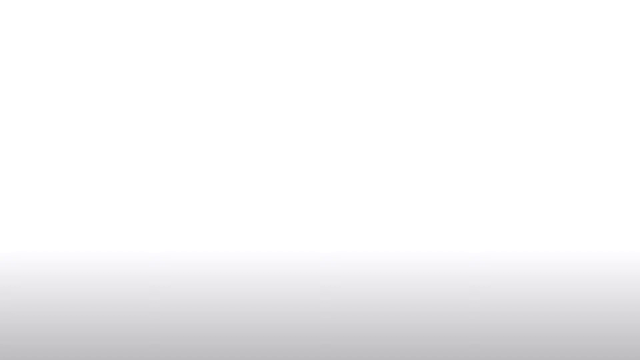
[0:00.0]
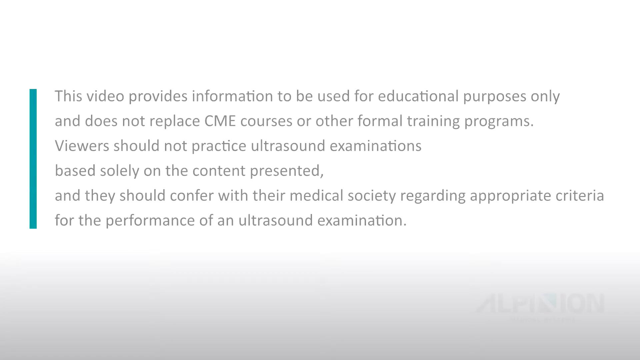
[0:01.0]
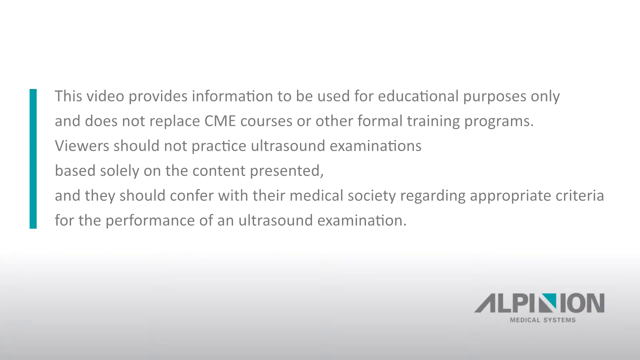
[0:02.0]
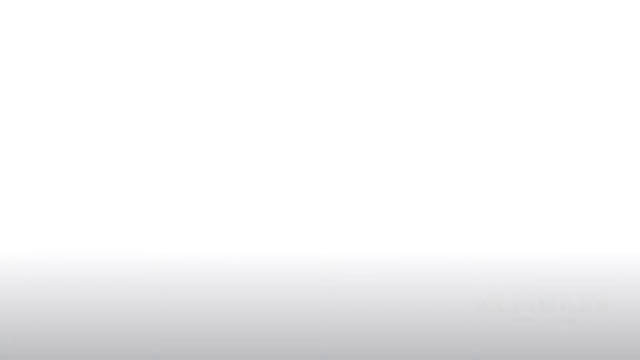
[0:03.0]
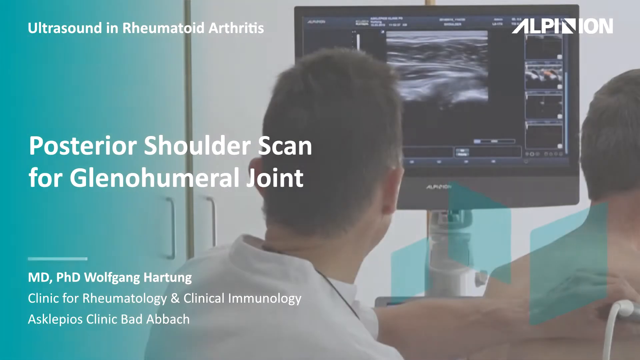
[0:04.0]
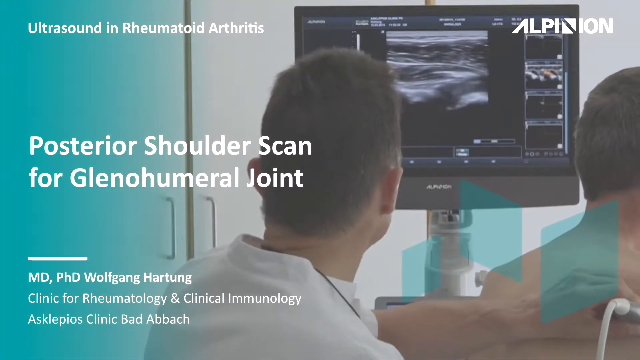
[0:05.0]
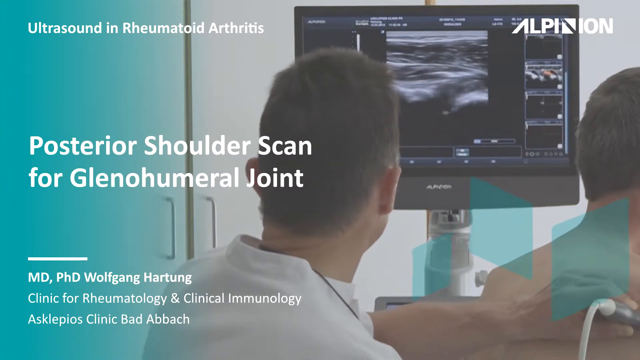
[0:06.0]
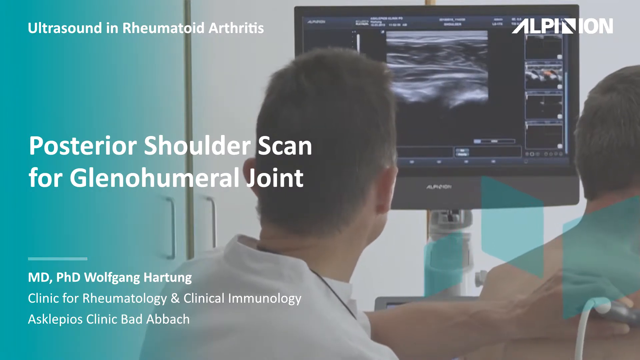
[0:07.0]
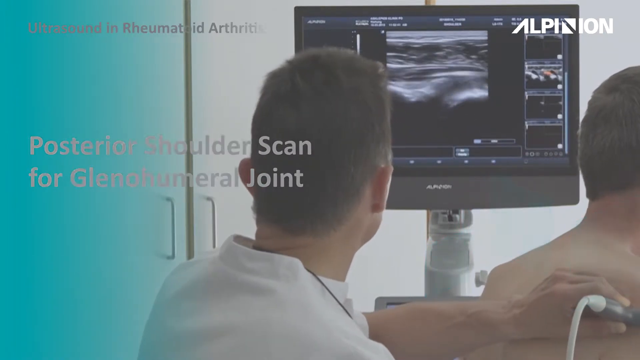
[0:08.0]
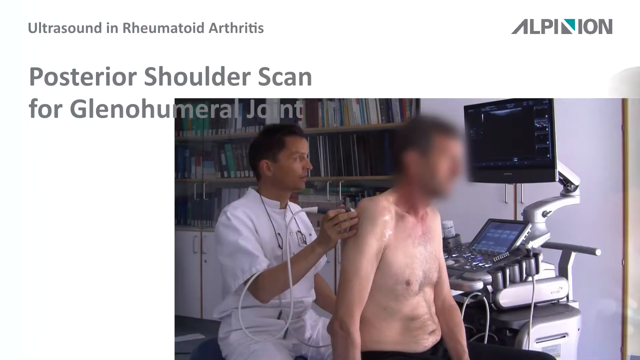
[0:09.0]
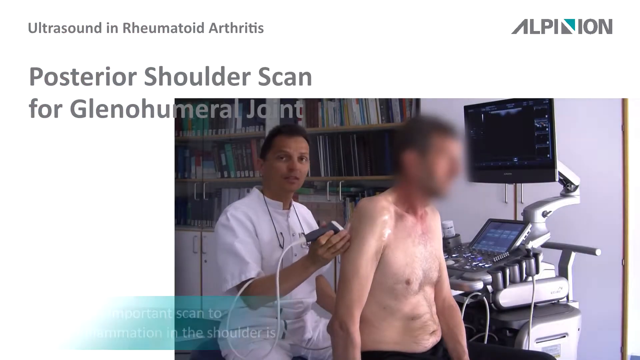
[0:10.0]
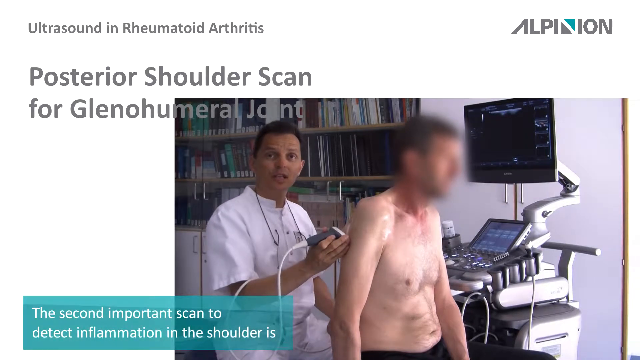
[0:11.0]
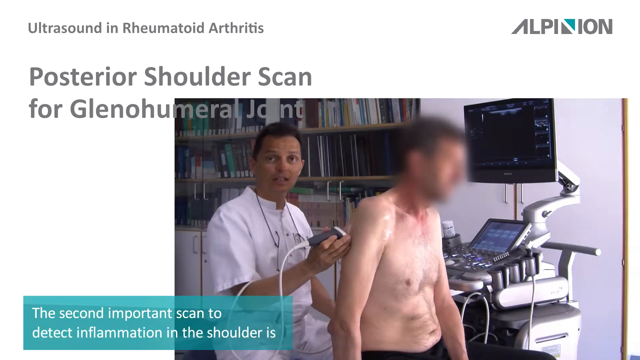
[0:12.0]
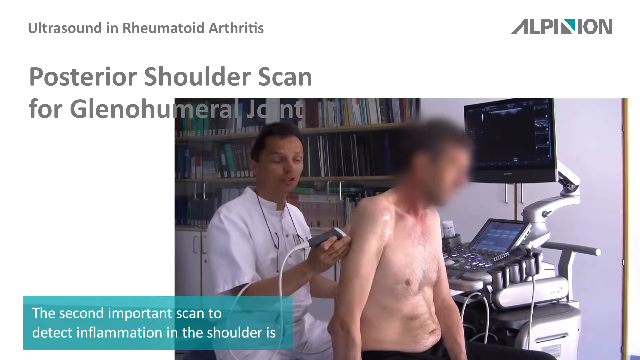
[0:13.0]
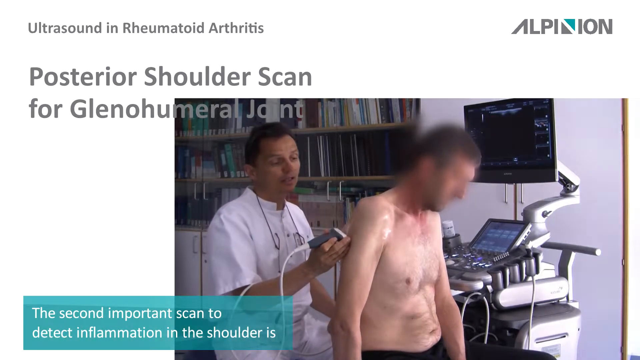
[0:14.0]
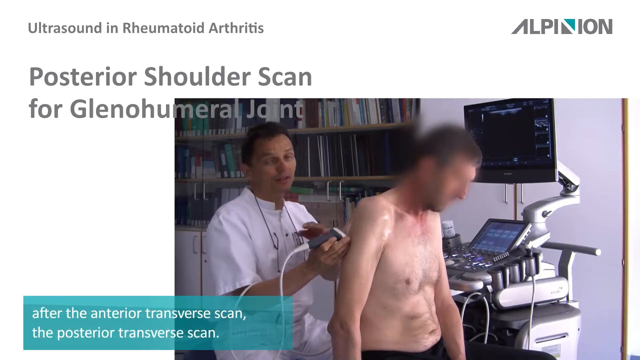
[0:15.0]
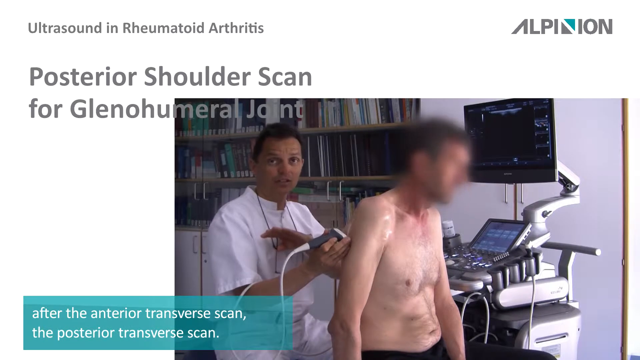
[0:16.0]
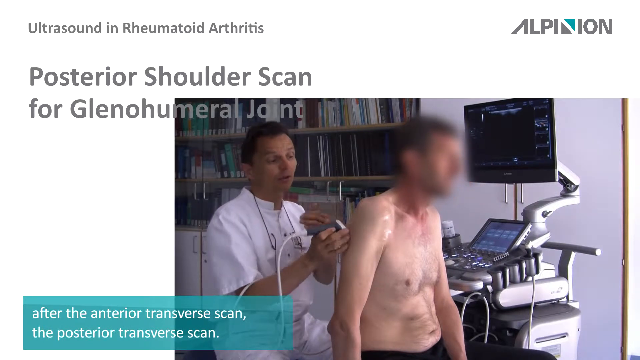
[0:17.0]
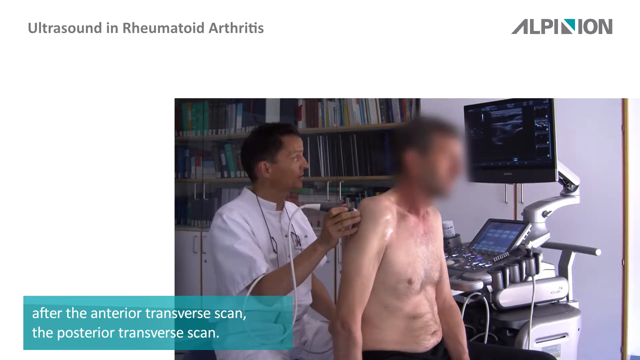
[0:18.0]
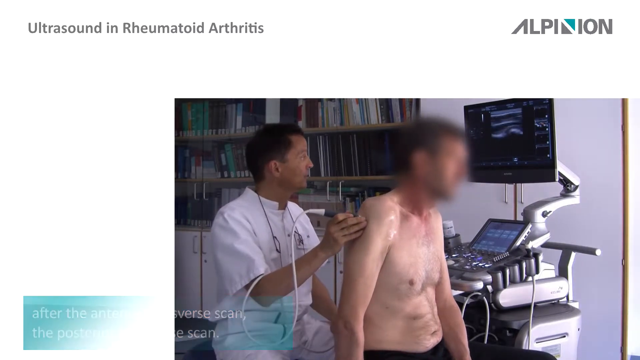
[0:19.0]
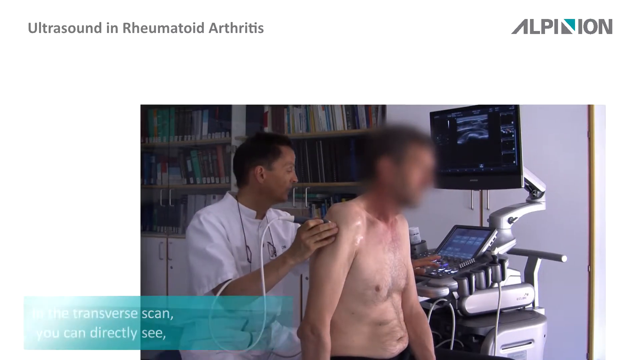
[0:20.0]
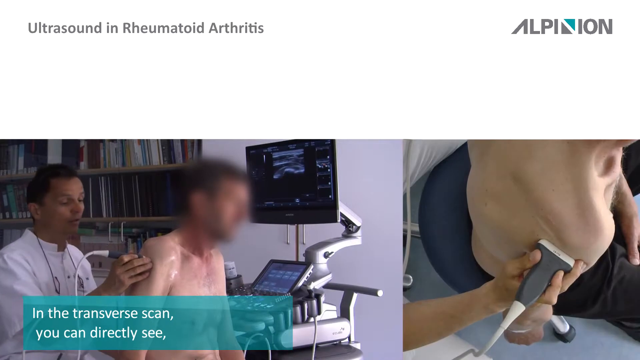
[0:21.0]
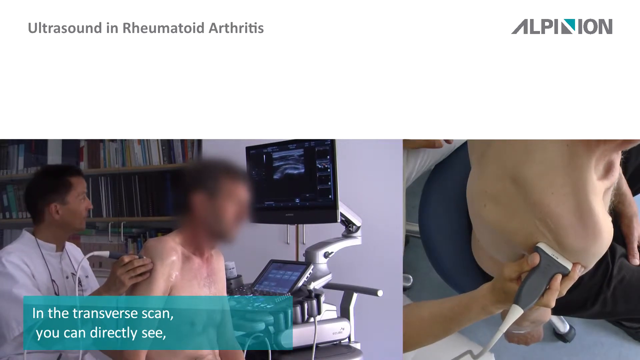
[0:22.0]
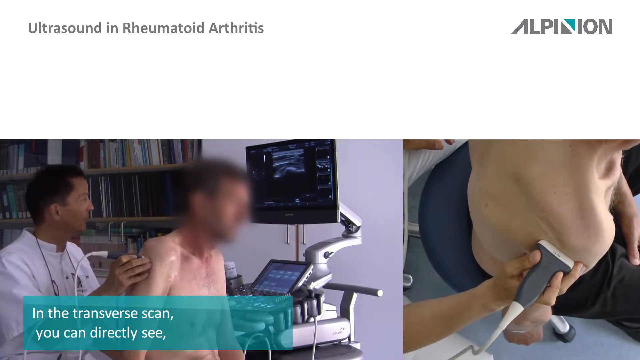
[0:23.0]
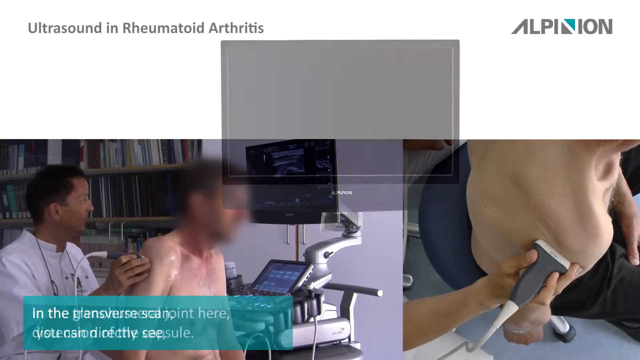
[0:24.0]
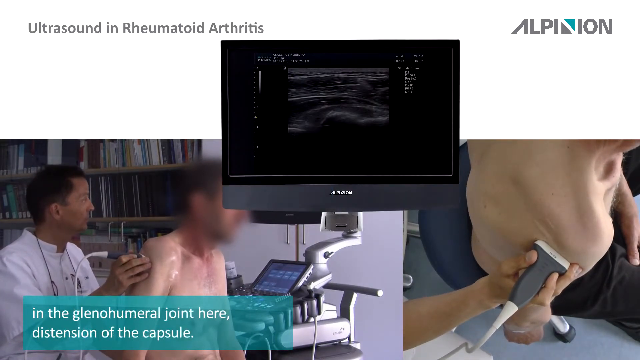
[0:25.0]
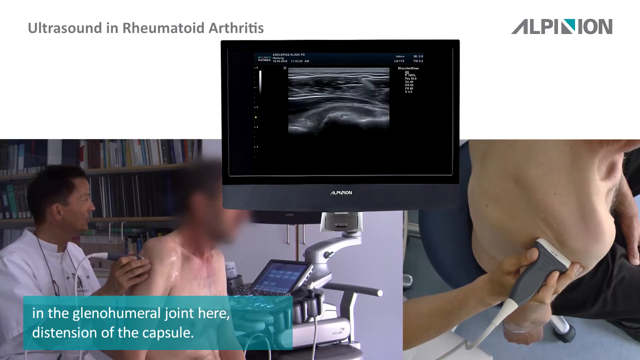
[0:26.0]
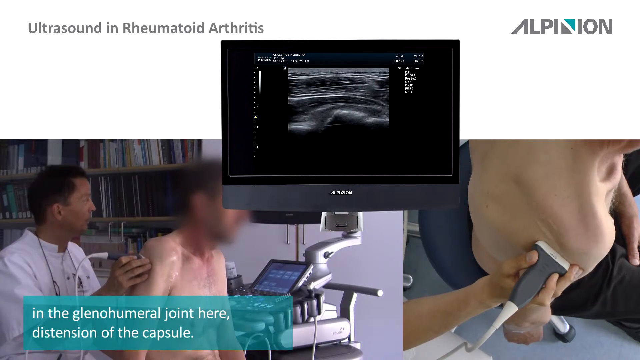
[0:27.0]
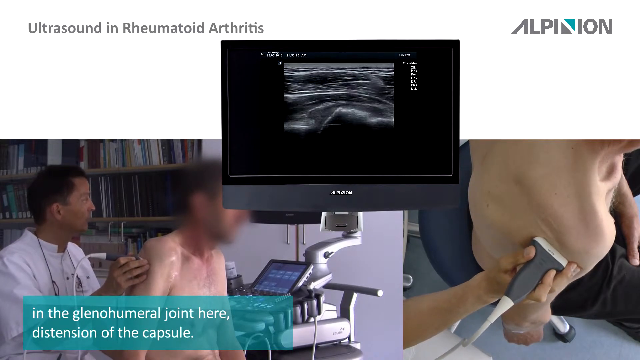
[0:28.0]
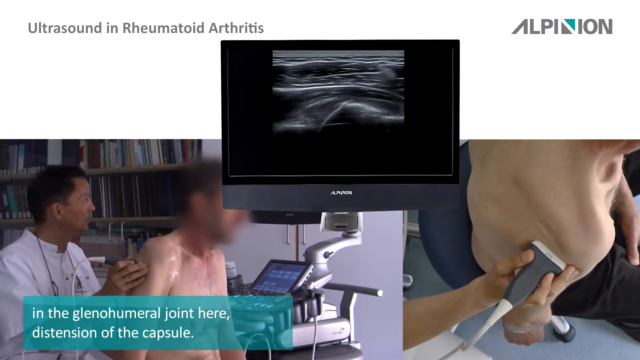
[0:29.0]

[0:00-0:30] A disclaimer appears on the screen for roughly two seconds: "This video provides information to be used for educational purposes only and does not replace CME courses or other formal training programmes. The user should not practice ultrasound examinations based solely on the content presented and they should confer with the medical society regarding appropriate criteria for the performance of an ultrasound examination." The video then introduces its topic, a posterior shoulder scan for the glenohumeral joint, apparently performed by MD PhD Wolfgang Hartung at the Clinic for Rheumatology and Clinical Immunology. A doctor then performs an ultrasound scan on a man whose face is blurred out and who has his top completely off. At the same time, text on the screen reads: "The second important scan to detect inflammation in the shoulder is after the anterior transverse scan, the posterior transverse scan. In the transverse scan you can directly see in the glenohumeral joint here, this distension of the capsule."